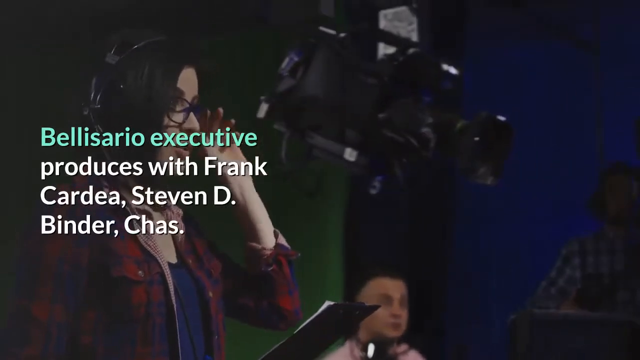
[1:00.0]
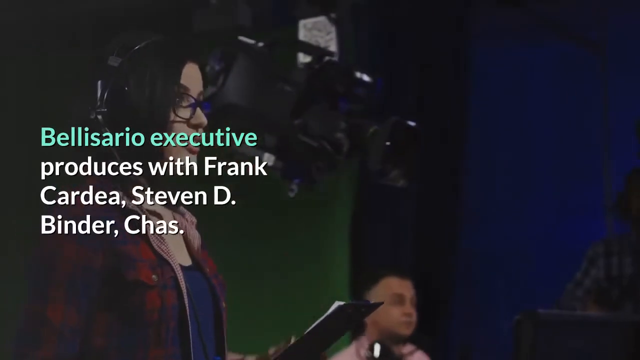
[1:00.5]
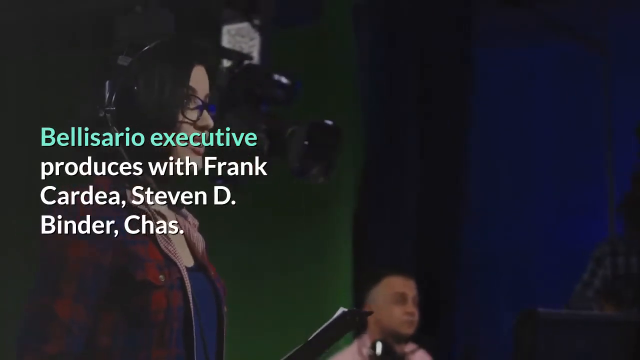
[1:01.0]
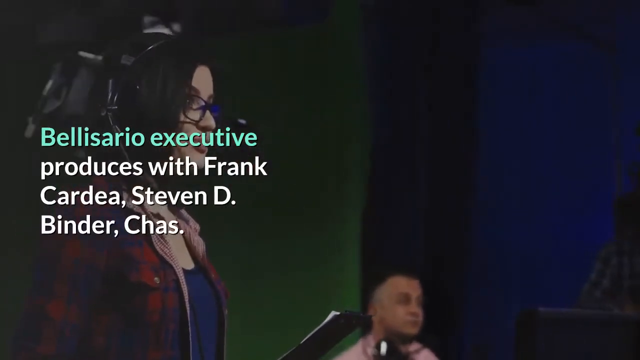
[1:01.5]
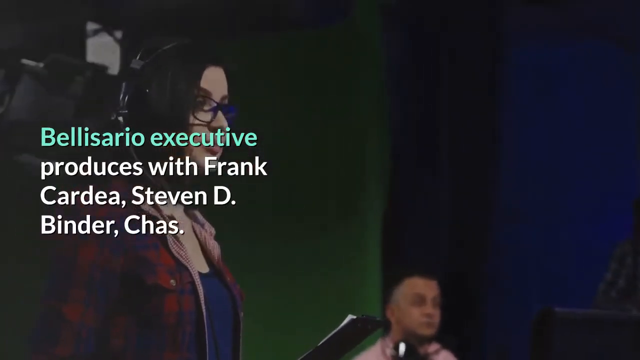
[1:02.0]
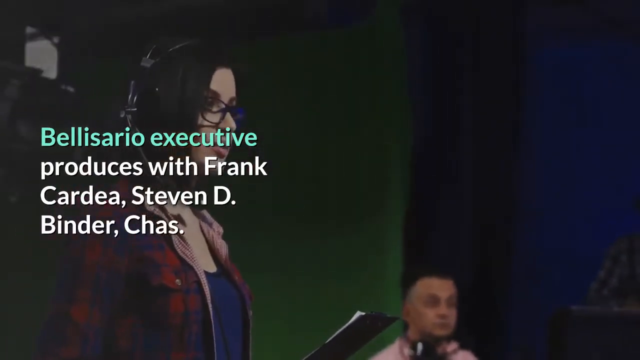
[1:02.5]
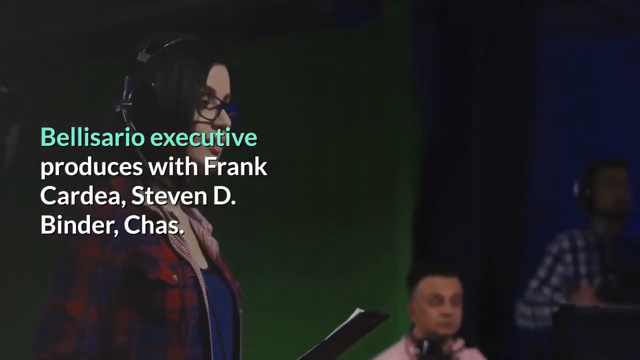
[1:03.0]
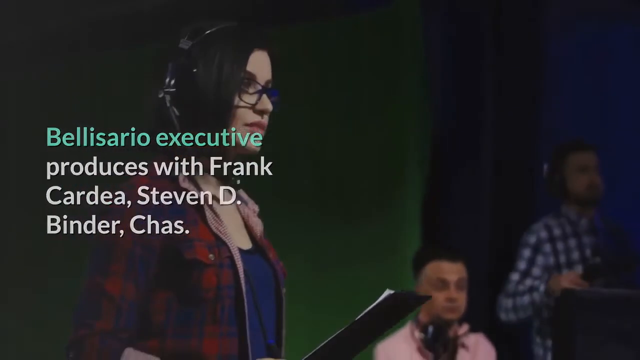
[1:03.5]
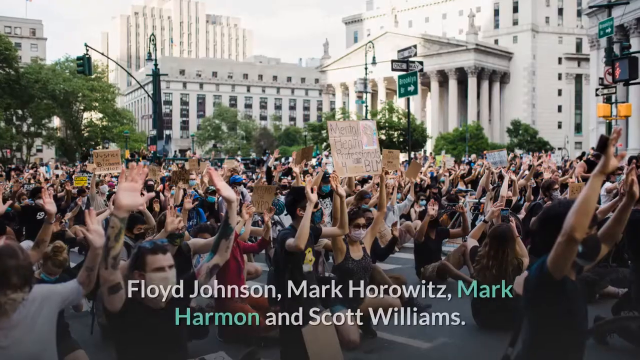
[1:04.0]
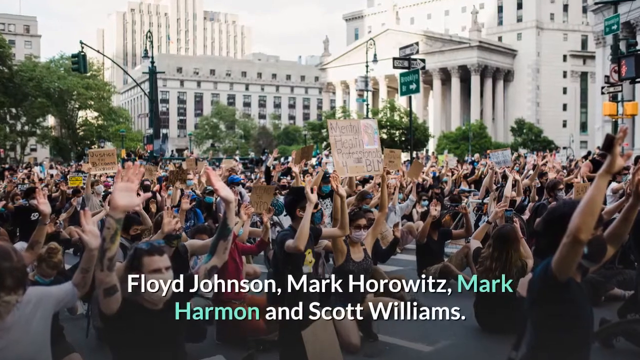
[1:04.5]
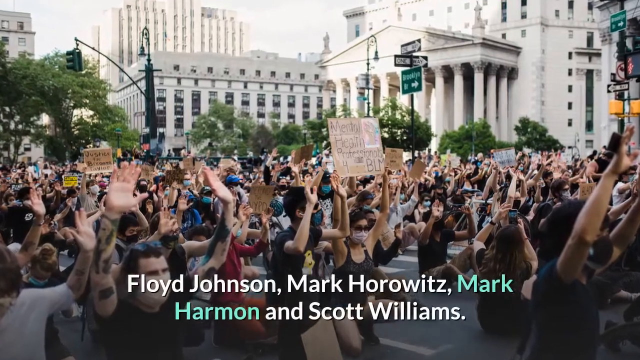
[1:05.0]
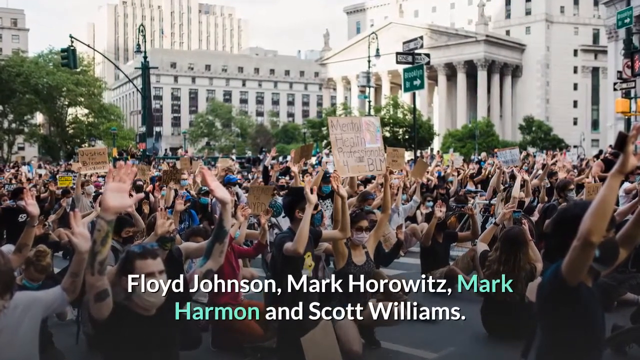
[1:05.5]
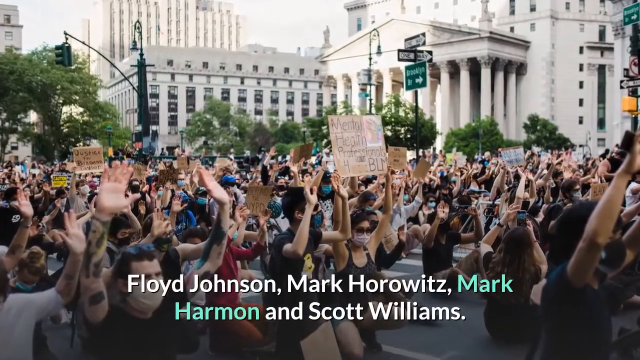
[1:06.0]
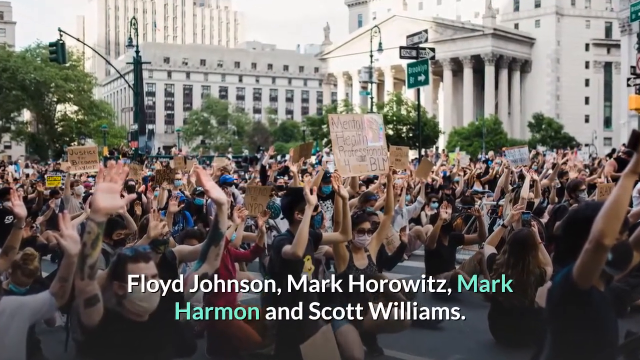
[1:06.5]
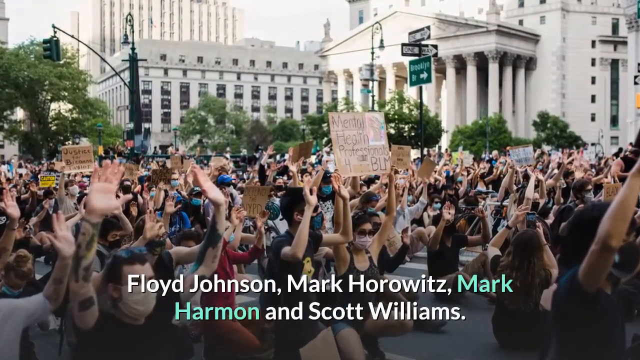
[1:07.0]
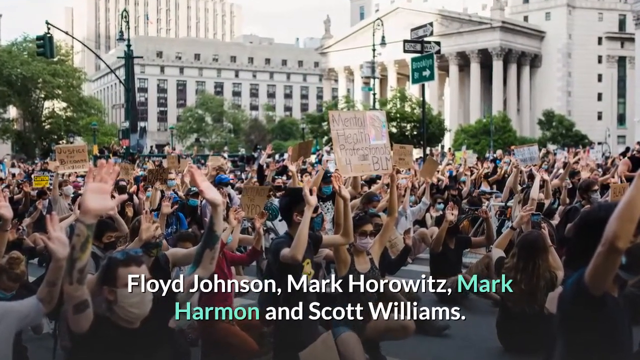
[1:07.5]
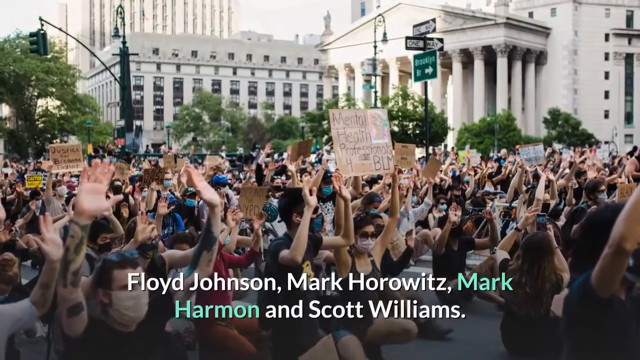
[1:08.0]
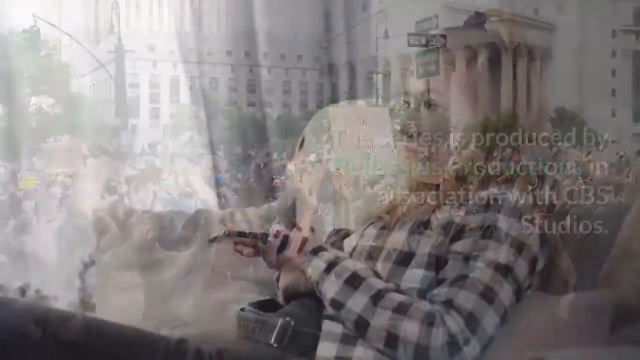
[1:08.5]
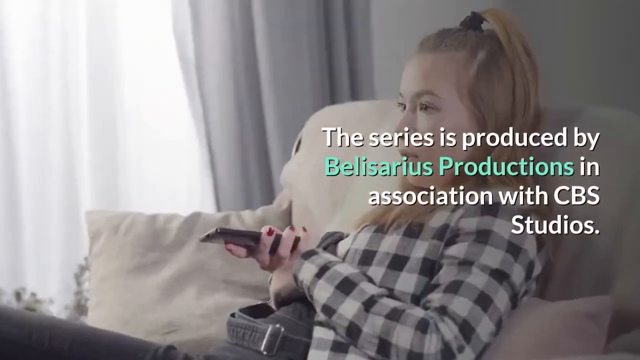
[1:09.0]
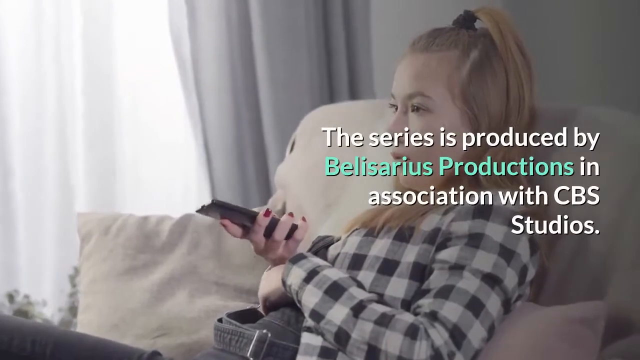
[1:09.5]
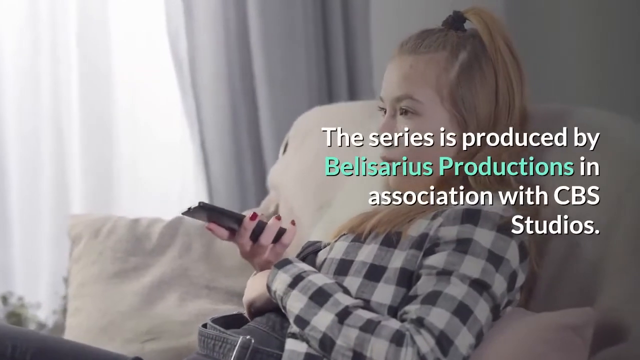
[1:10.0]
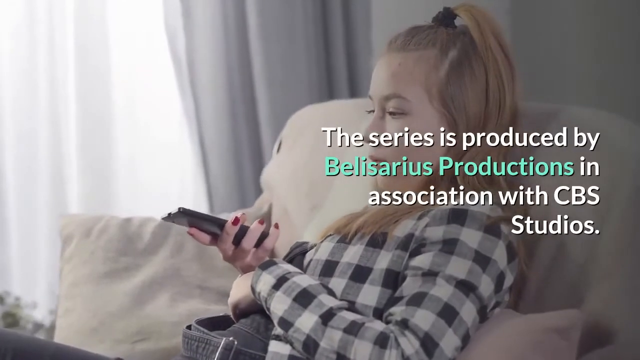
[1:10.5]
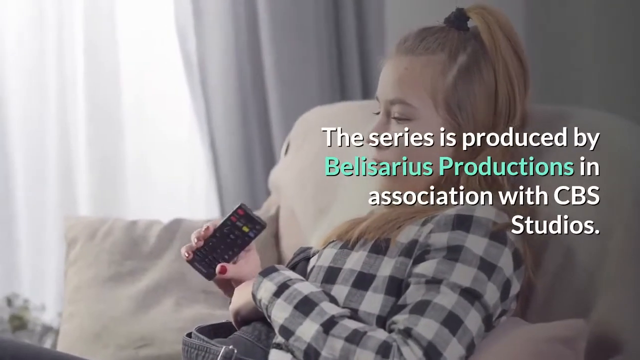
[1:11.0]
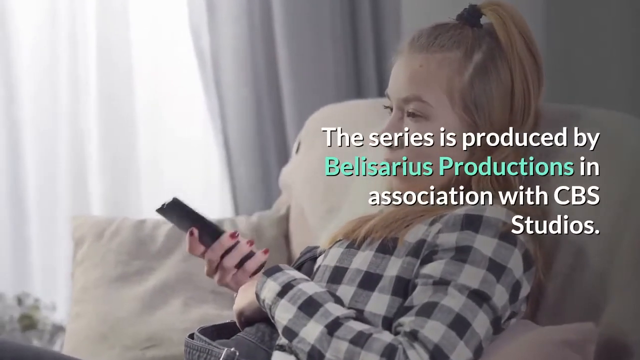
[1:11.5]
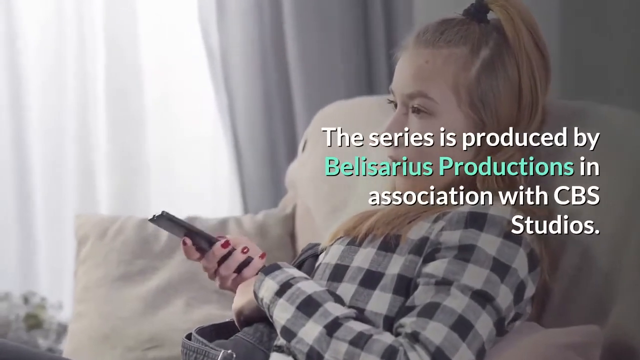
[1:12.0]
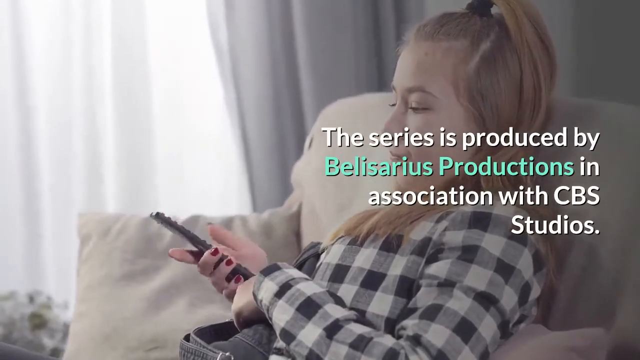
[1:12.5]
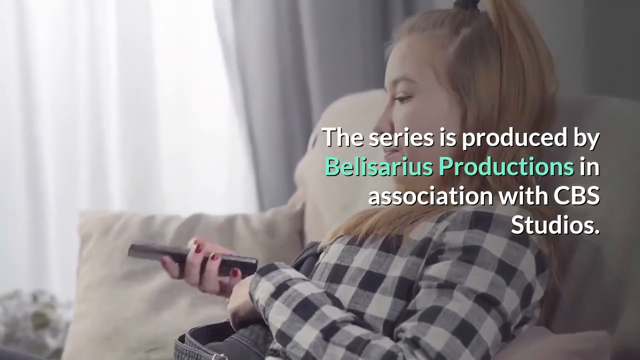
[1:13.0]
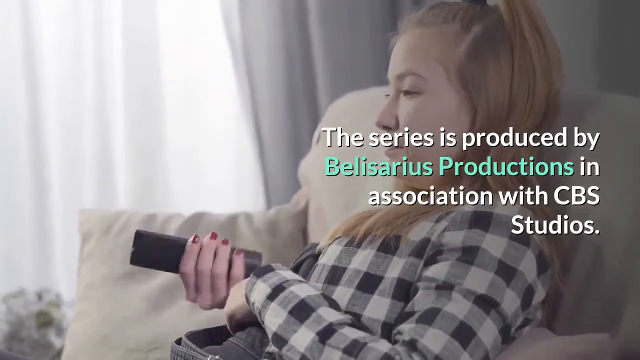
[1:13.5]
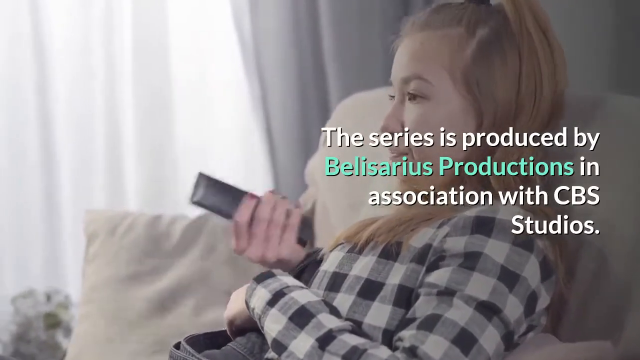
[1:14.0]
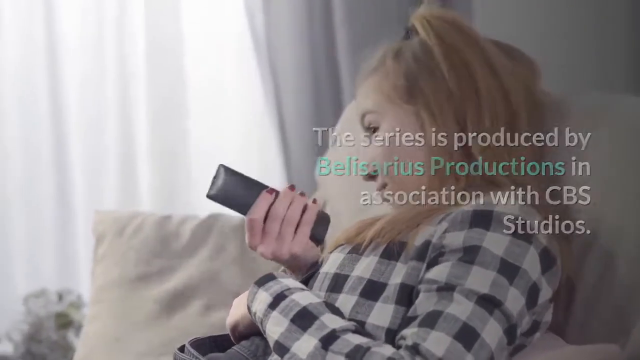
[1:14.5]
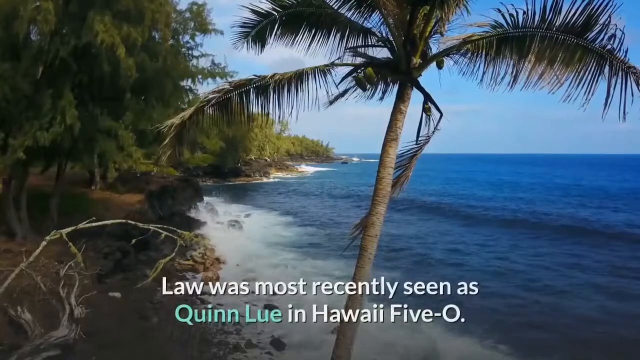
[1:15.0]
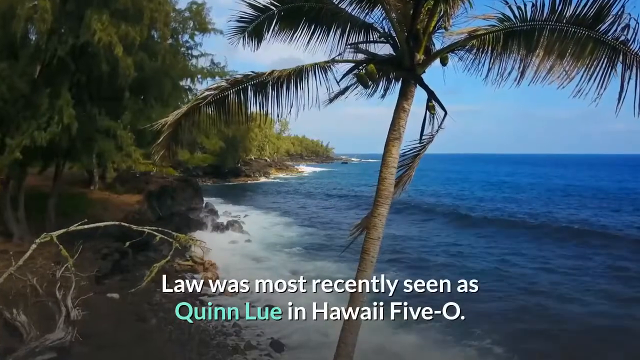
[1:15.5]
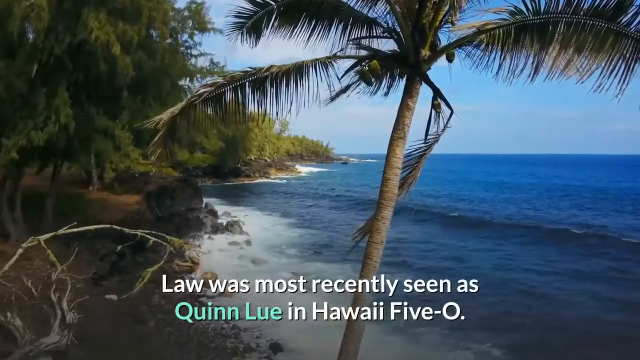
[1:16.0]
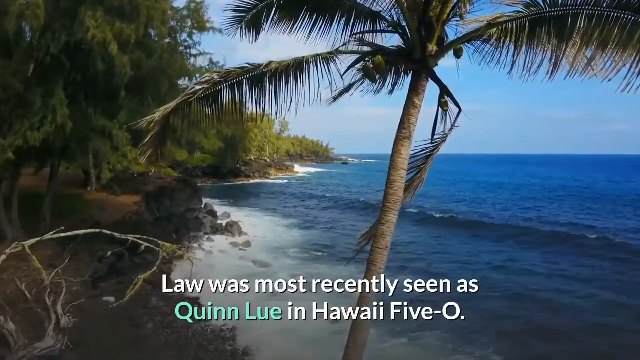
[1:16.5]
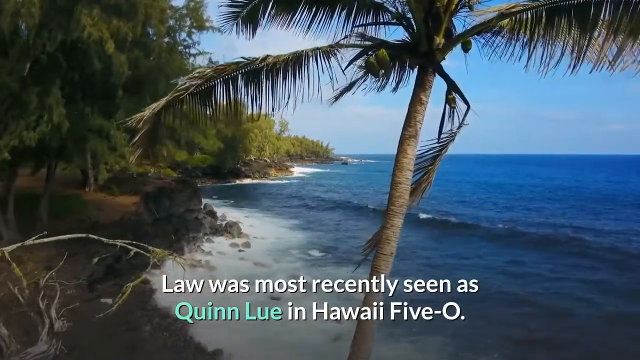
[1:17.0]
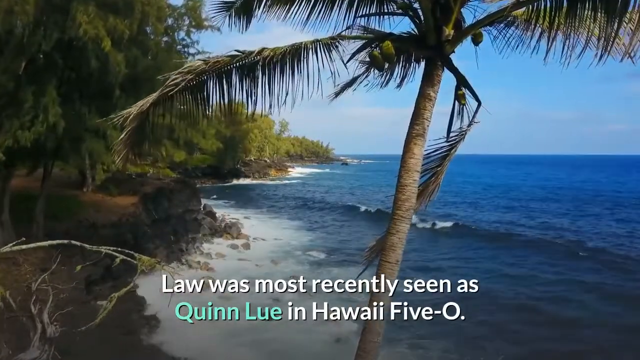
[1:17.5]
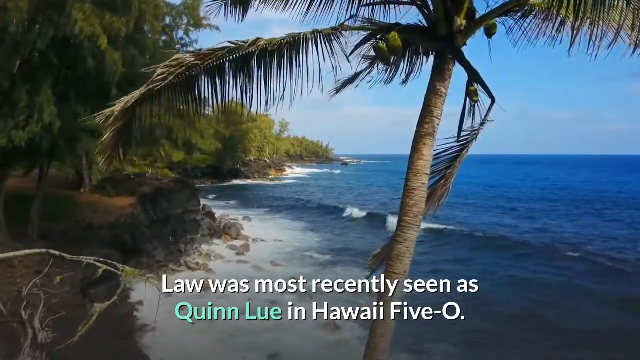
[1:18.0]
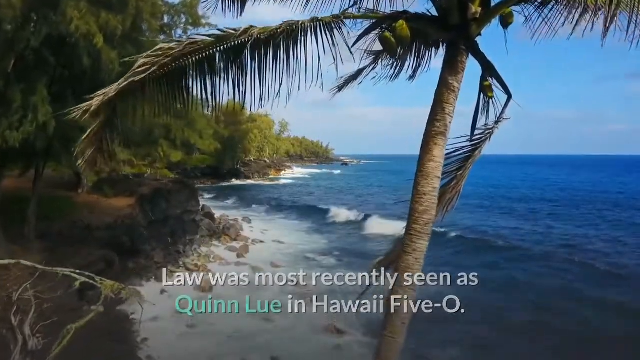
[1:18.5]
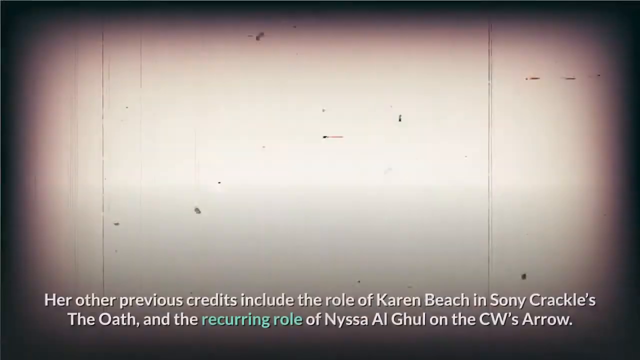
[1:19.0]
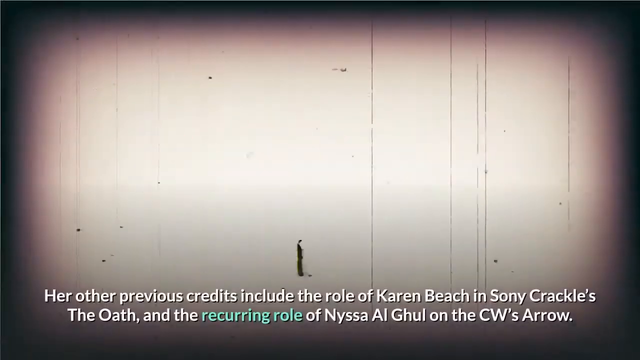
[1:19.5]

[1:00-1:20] A woman stands next to a camera, wearing headphones and dark-rimmed glasses. She appears to be getting ready to adjust her glasses with her left hand. The camera disappears behind her, kind of floating away as if it is on a tripod and someone moved it. Next is an outdoor scene in a downtown city area, where a crowd of protesters marches down the street with their hands up in the air. Text at the bottom of the screen reads "Floyd Johnson, Mark Horowitz, Mark Harmon, and Scott Williams." The text promotes a TV show, and the protest behind it has nothing to do with it. A woman then sits on her couch holding a remote control, seen in profile. Her ponytail comes out of the very top of her head, and her long hair falls onto her shoulders. She wears a black and white checkered shirt and looks like she is pressing buttons to change the channels on the TV. The last scene is tropical, apparently beside a tropical island, with ocean waves coming in and landing on the shore.